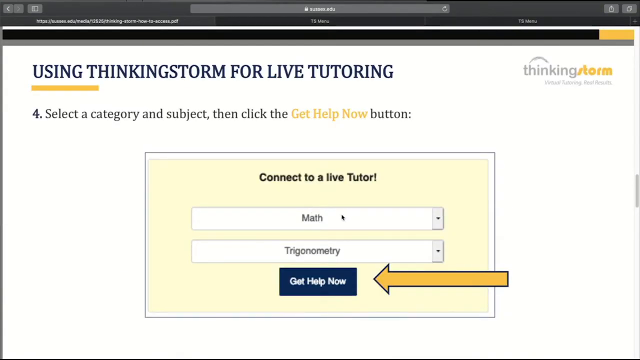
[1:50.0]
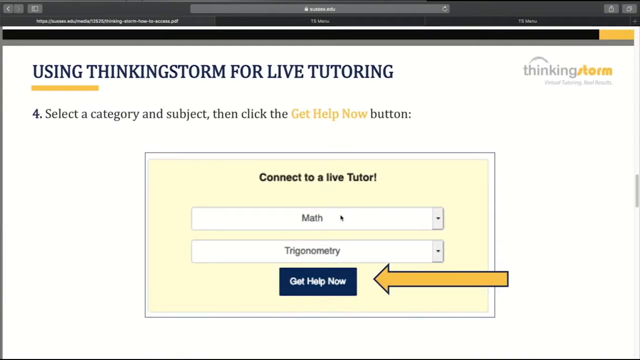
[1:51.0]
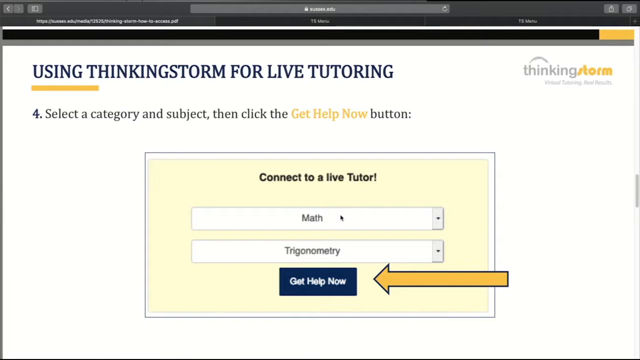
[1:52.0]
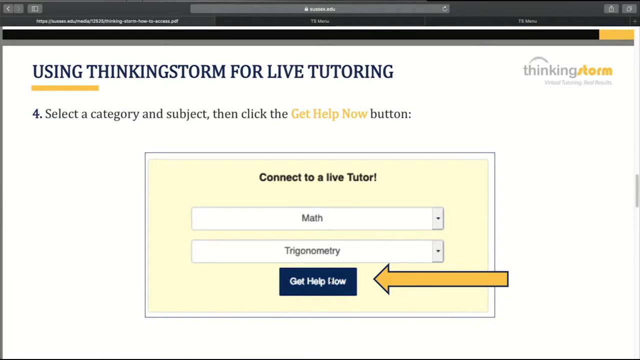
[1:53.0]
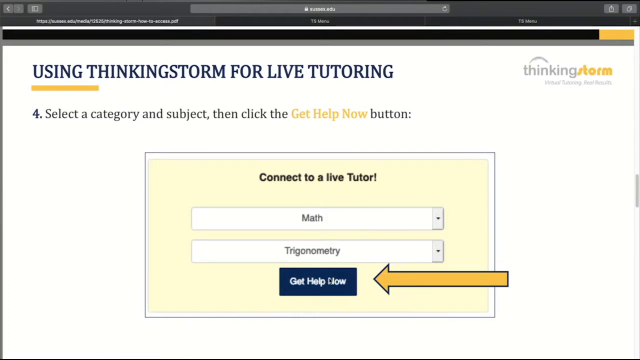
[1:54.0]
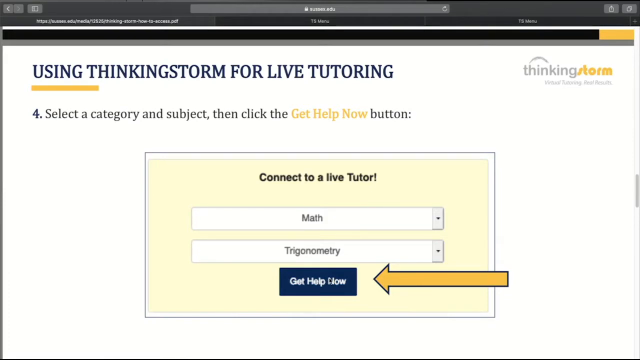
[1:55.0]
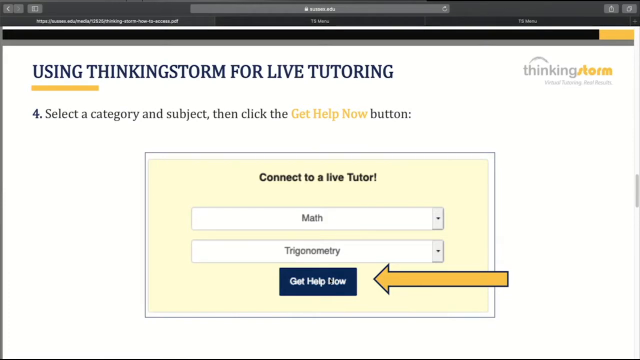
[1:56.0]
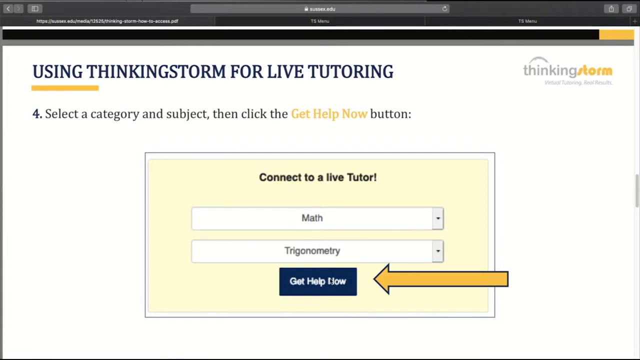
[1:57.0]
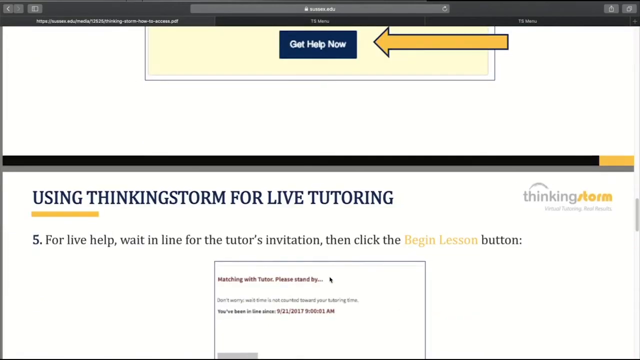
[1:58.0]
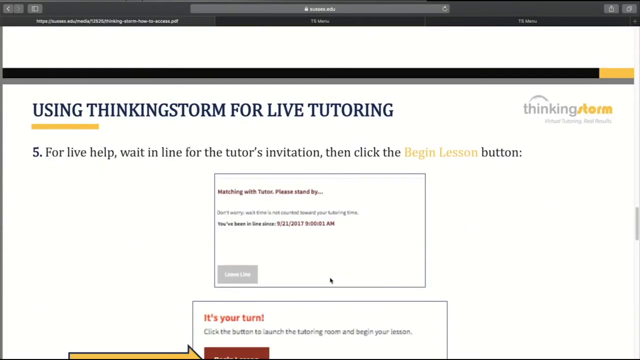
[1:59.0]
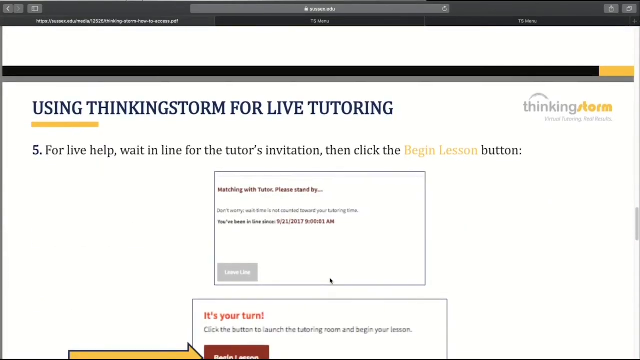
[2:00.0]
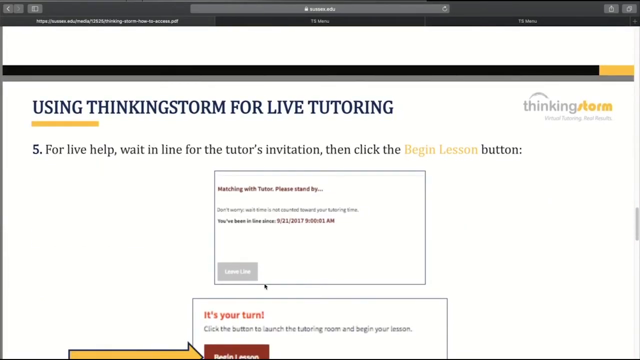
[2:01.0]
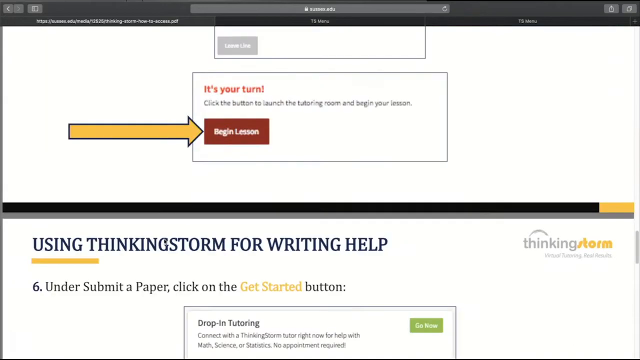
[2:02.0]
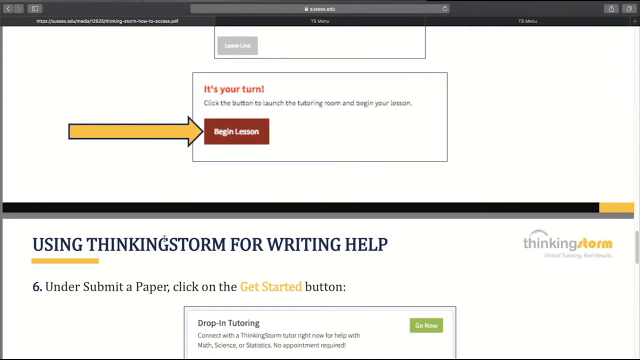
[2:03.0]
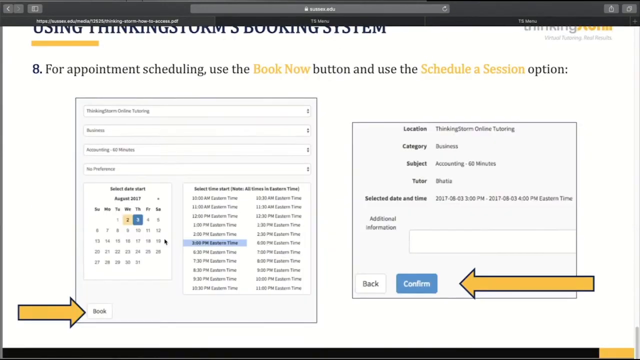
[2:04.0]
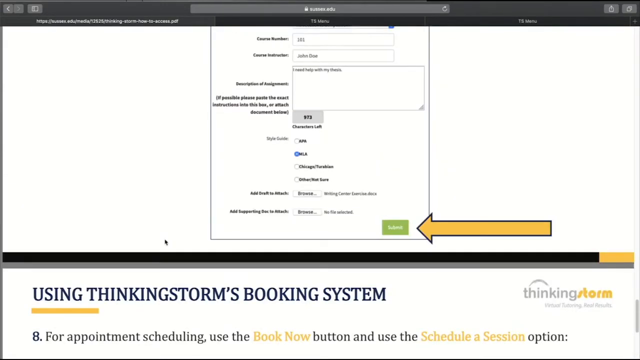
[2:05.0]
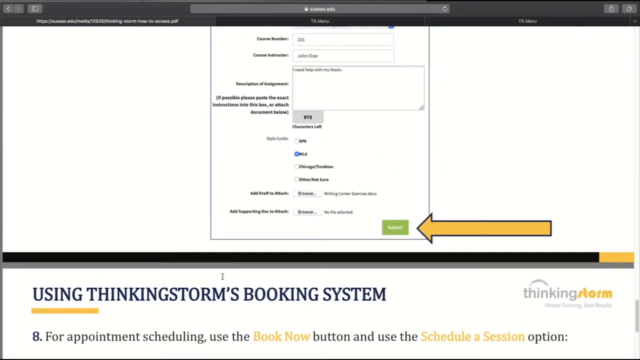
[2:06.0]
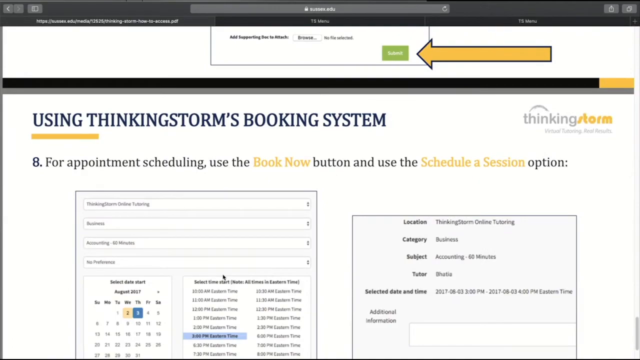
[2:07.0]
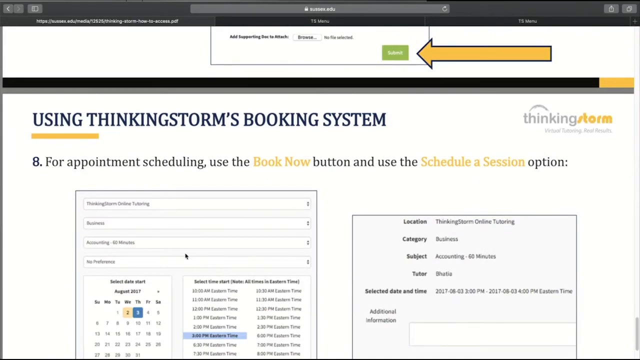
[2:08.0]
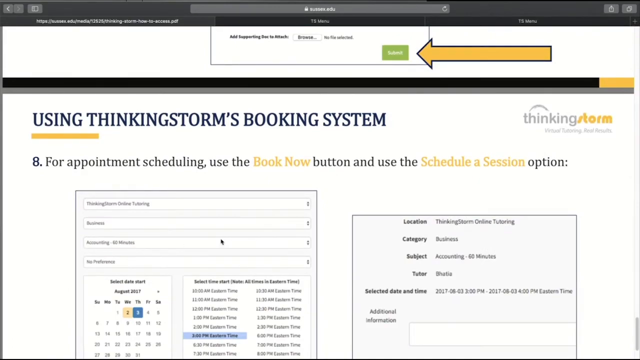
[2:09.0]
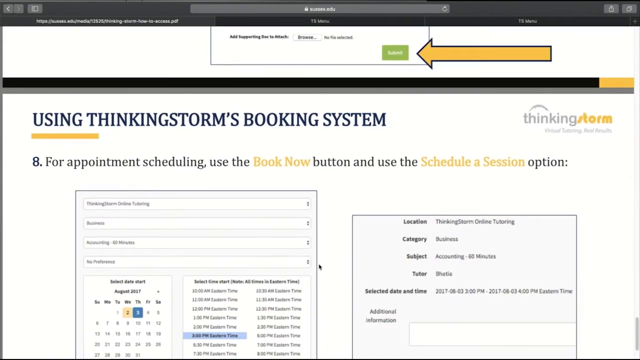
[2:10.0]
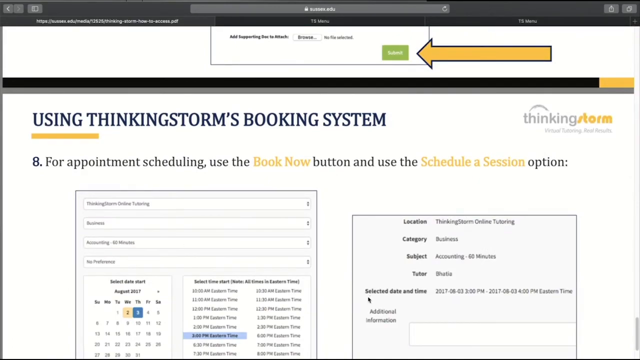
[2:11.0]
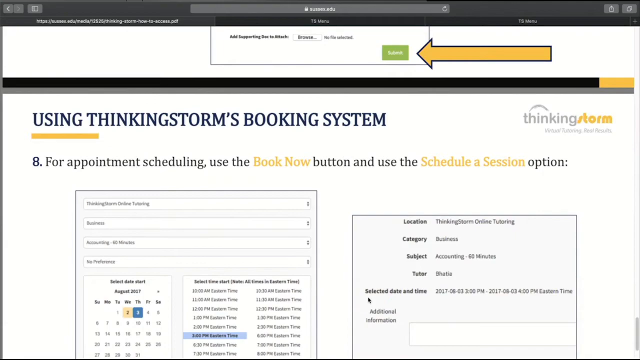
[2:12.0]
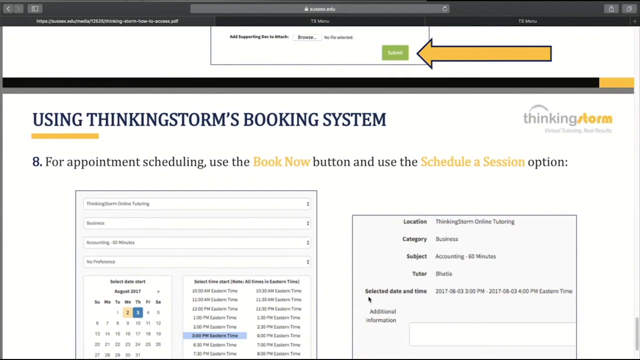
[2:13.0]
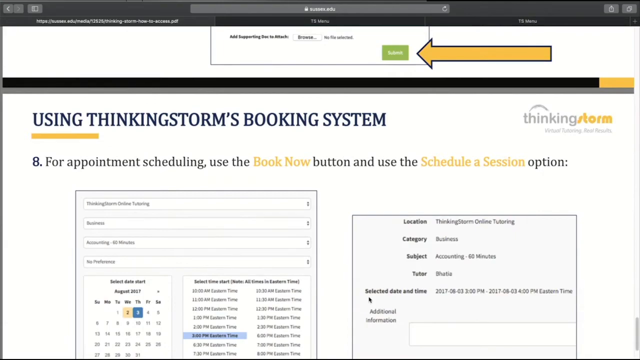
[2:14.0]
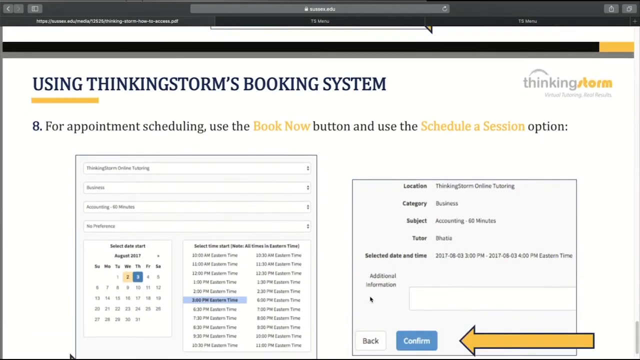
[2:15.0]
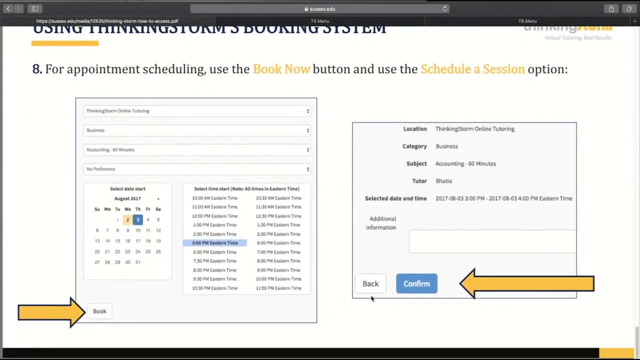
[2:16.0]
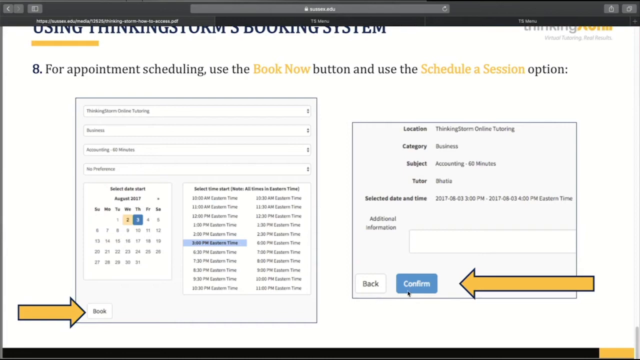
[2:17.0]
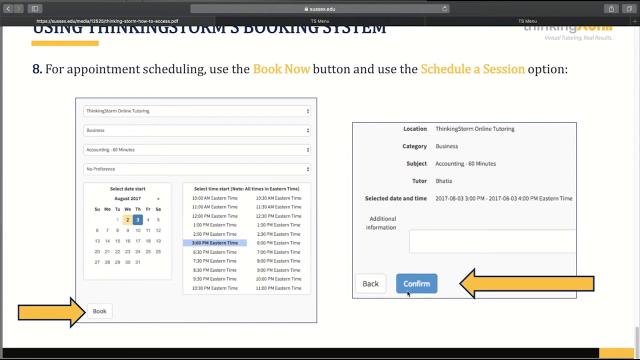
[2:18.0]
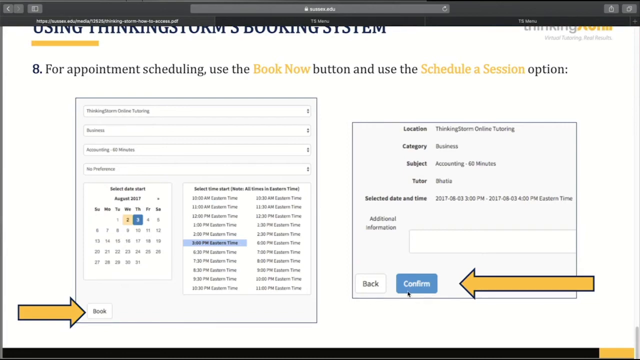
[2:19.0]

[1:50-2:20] What appears to be a presentation called "Using ThinkingStorm for Live Tutoring" shows a slide numbered four, instructing the user to select a category and subject and click the "Get Help Now" button to be connected to a live tutor. The next slide says that for live help the user should wait in line for an invitation, and when accepted by the tutor, click the "Begin Lesson" button to start the lesson. Another slide, numbered eight, explains how to schedule appointments using the "Book Now" button and the "Schedule a Session" option: pick a date, month and hour, then click "Book", review the options, and click "Confirm".